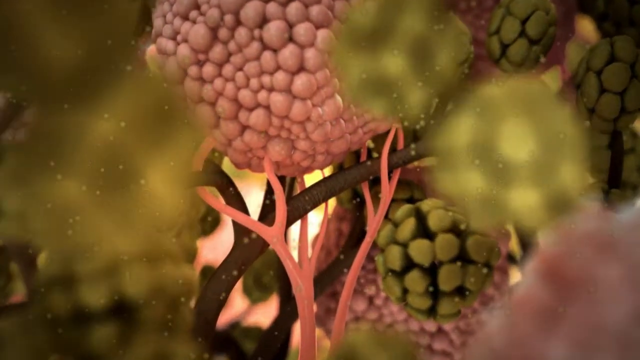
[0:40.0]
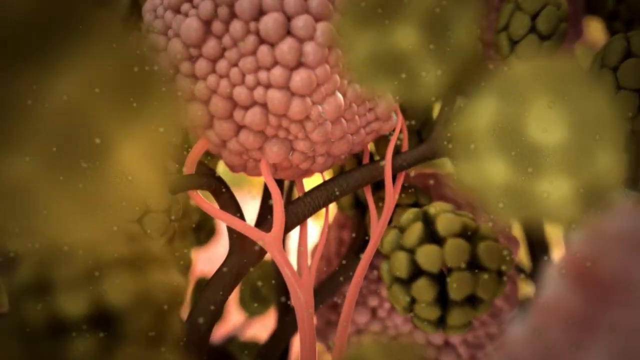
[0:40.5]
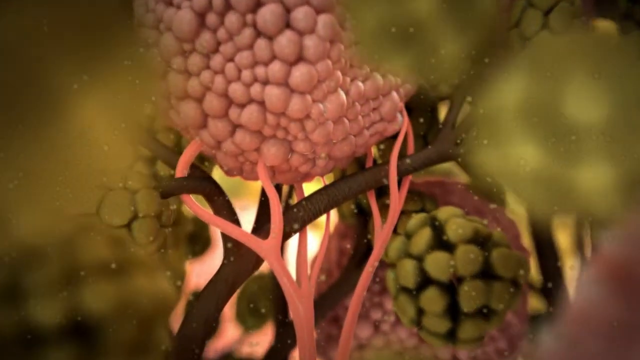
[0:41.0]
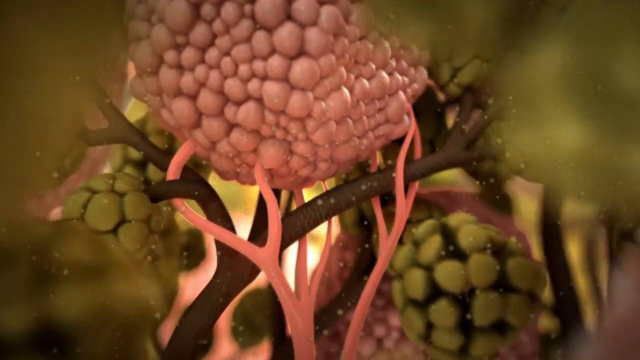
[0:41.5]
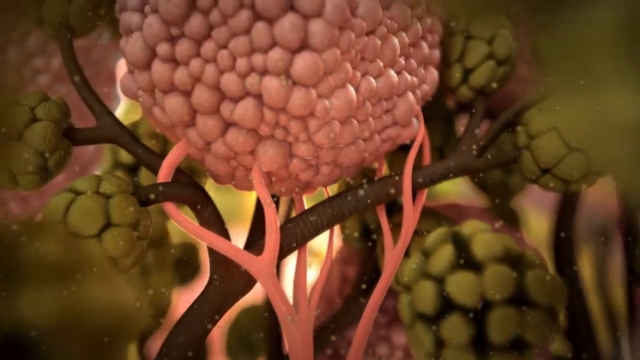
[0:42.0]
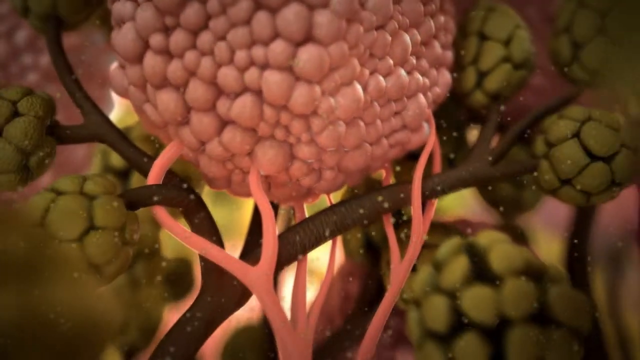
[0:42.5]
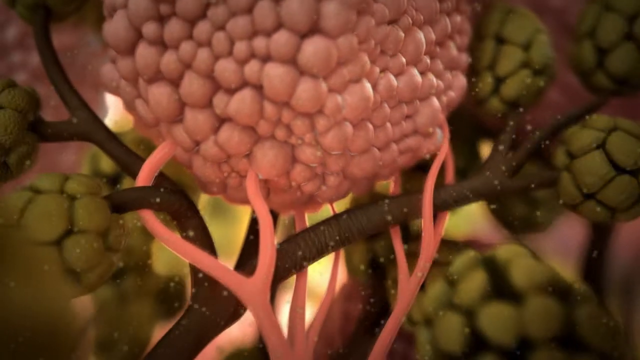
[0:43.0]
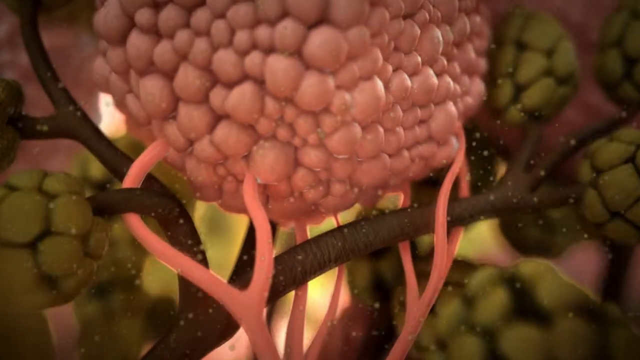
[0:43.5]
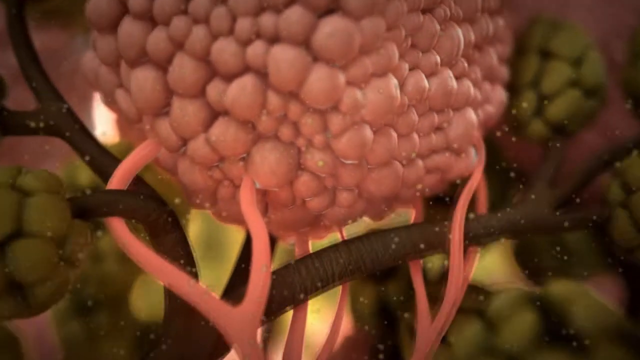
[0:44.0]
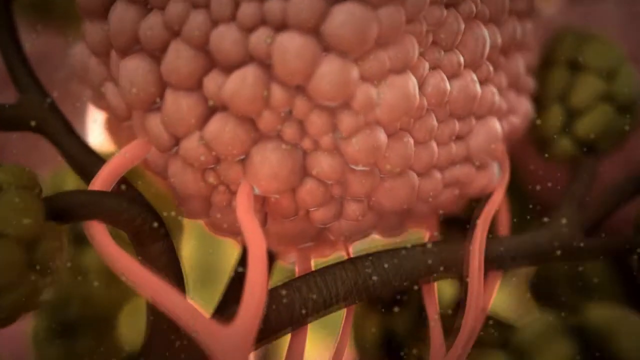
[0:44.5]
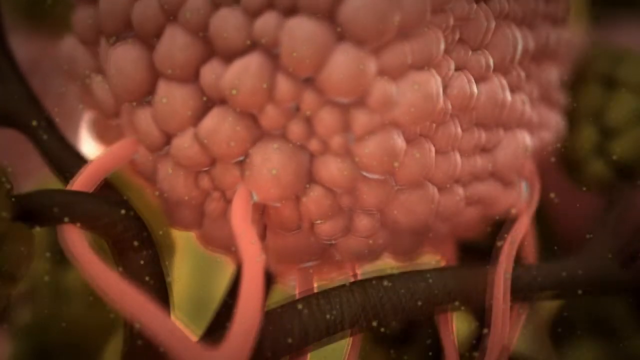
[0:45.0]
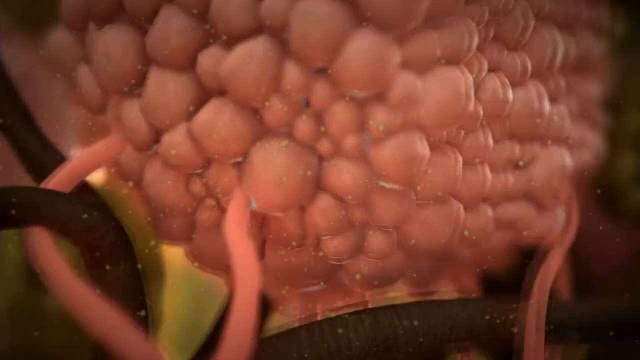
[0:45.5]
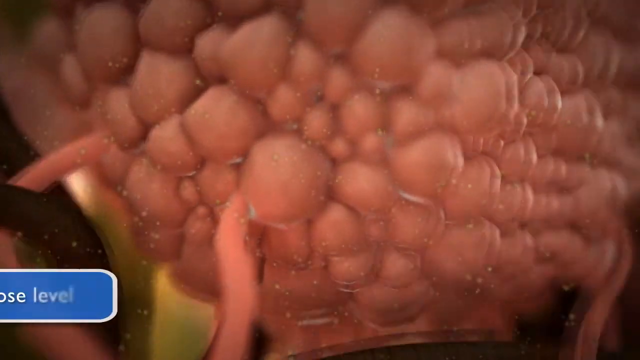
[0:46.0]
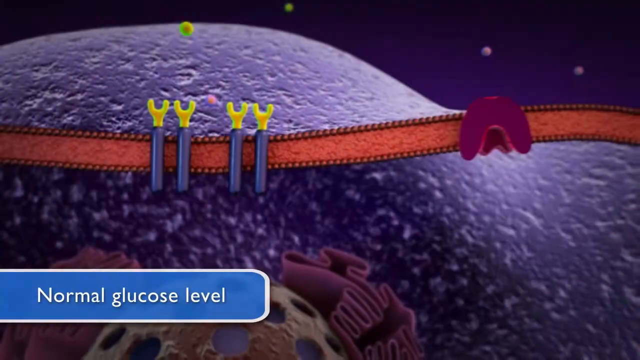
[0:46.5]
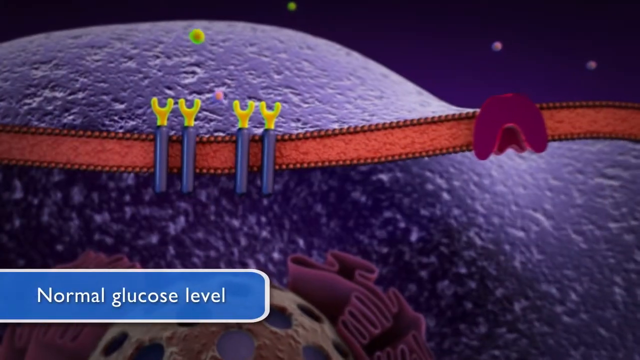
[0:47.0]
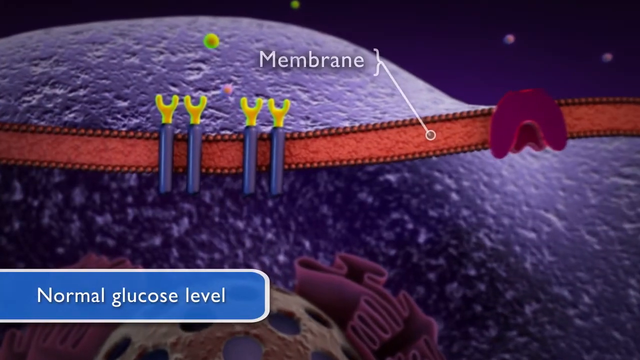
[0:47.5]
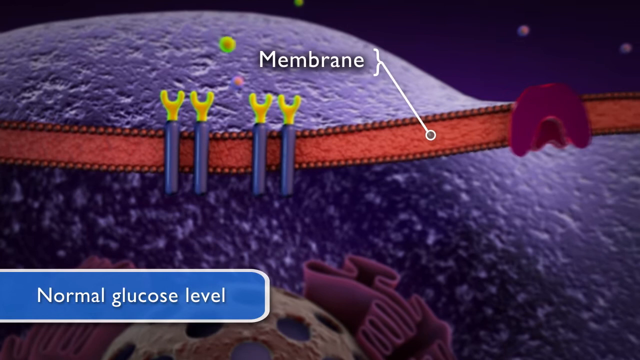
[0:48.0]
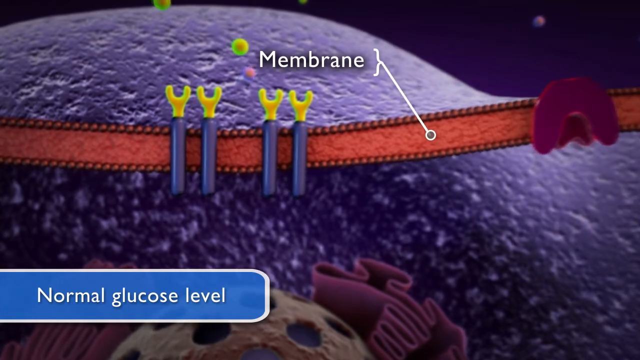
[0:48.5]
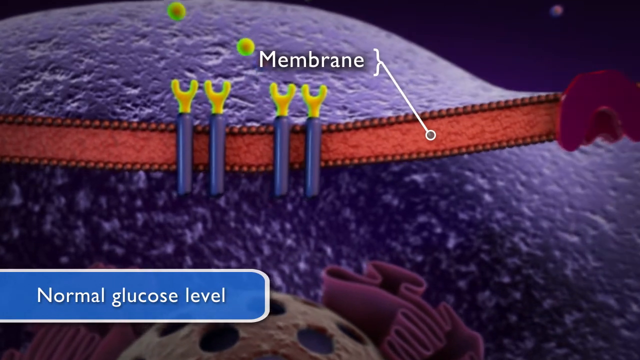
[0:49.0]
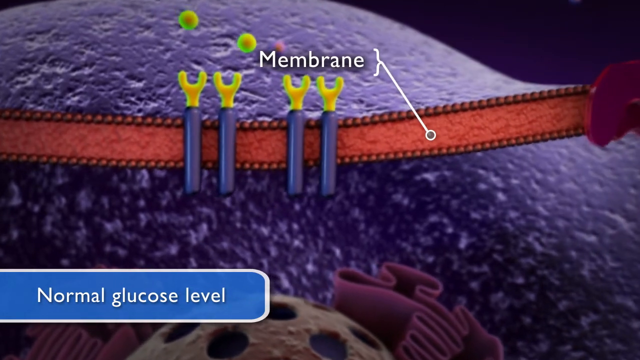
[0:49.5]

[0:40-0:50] The animation of the pancreas at a micro level continues, as though seen through a microscope. Large grape-like clusters of cells, either pink or green, are attached together by pink and brown branches that may represent arteries or other vessels. The view zooms in on a very large pink cluster of cells, surrounded by tiny yellow flecks of some substance moving towards it. The next screen shows what looks like a purple mountain or hill, which seems to be a representation of something happening inside the body. Across the centre of the screen is something that looks like a red mottled ribbon. On the right is an upside-down purple U-shaped structure, and on the left four blue sticks are laid vertically across the ribbon, each with a yellow hook on top. In the bottom left of the screen is a blue horizontal rectangle with white text that says "normal glucose level". The word "membrane" appears in white text at the top centre of the screen, with a white line pointing to the mottled red ribbon. Two yellow dots float above the yellow hooks and gradually move down and settle inside them.